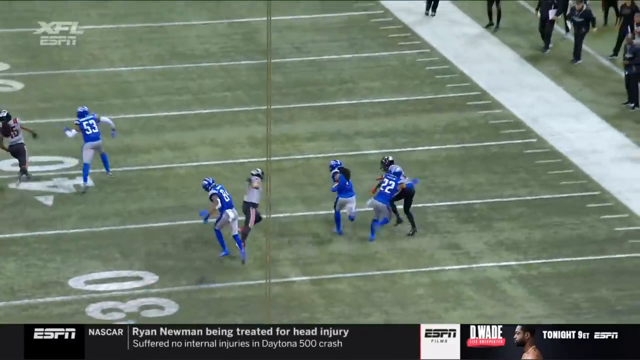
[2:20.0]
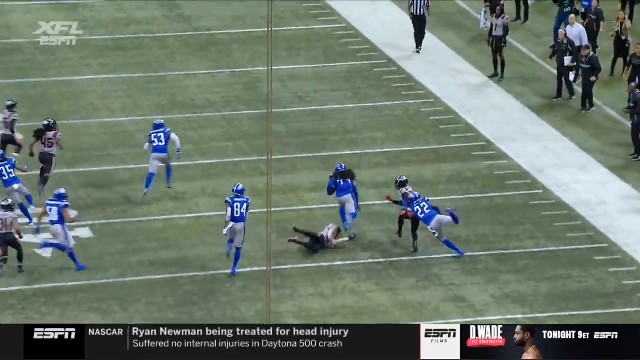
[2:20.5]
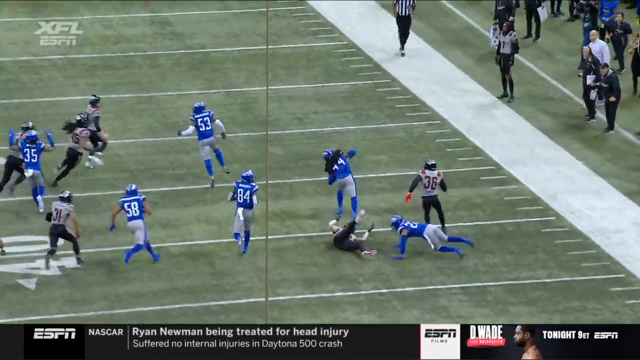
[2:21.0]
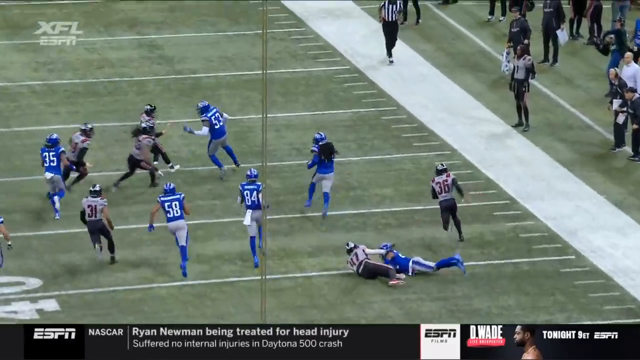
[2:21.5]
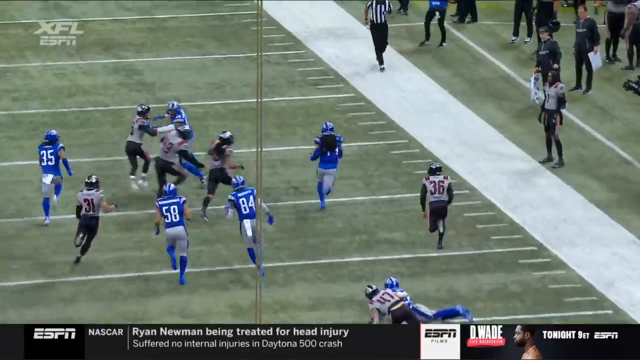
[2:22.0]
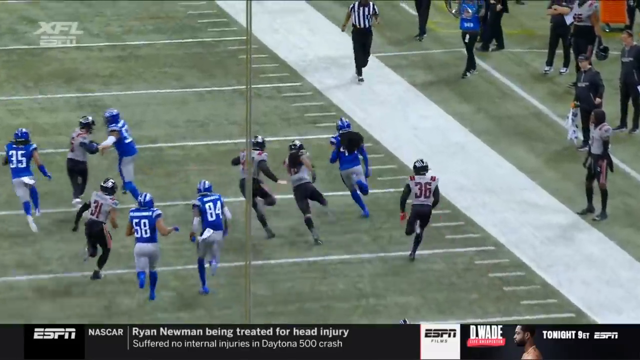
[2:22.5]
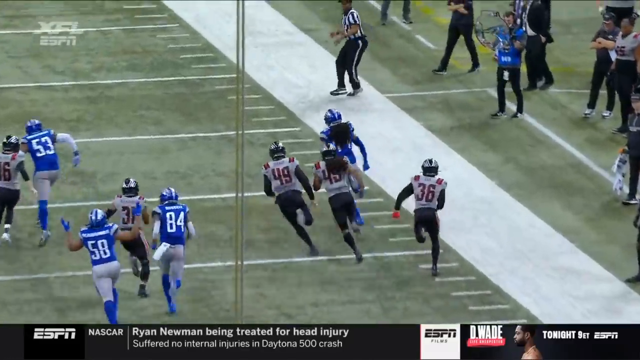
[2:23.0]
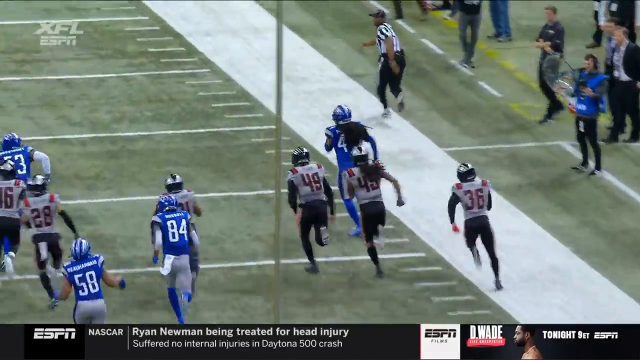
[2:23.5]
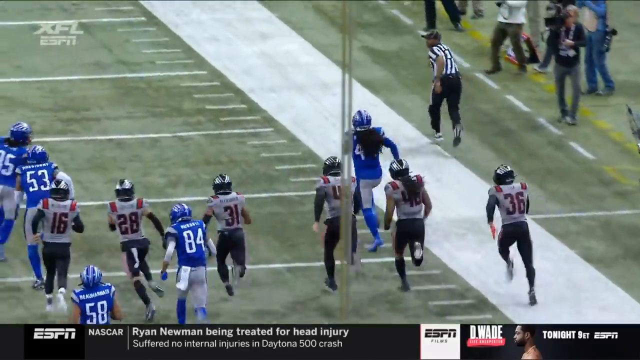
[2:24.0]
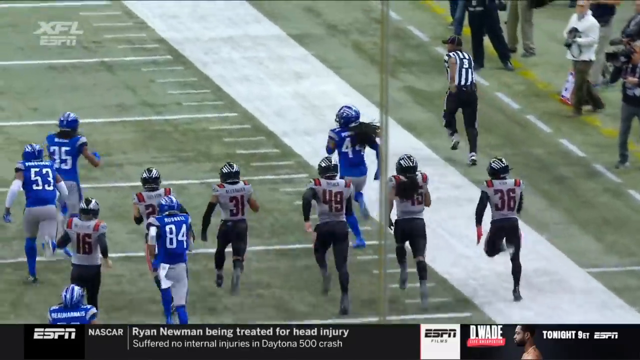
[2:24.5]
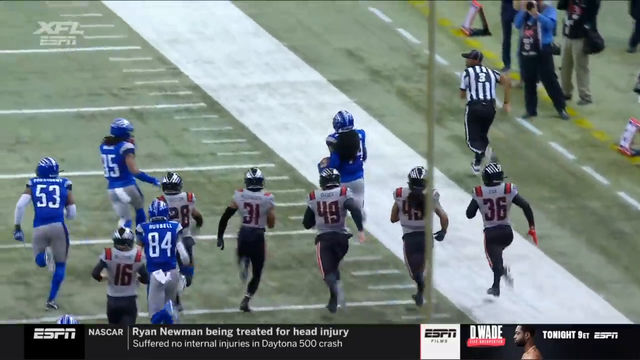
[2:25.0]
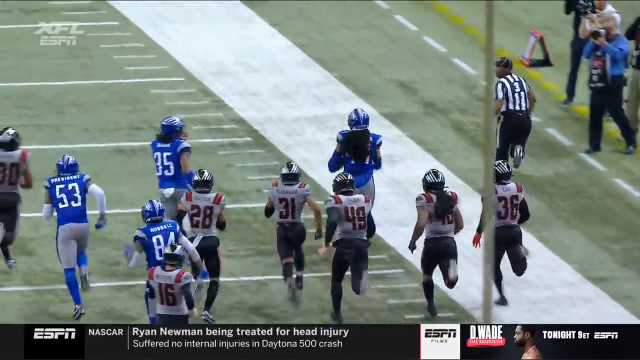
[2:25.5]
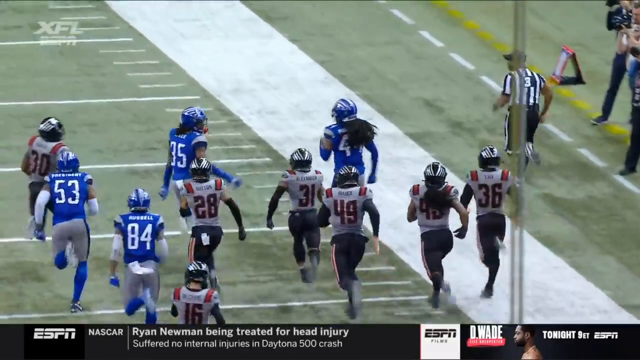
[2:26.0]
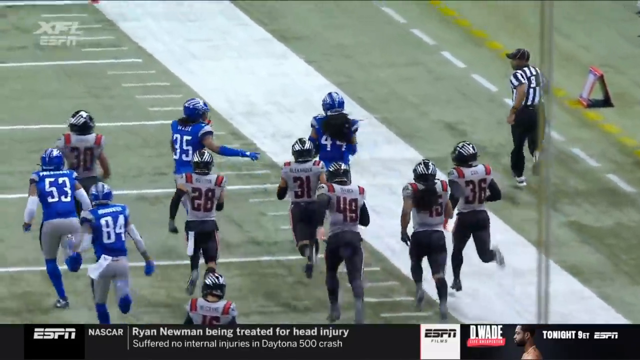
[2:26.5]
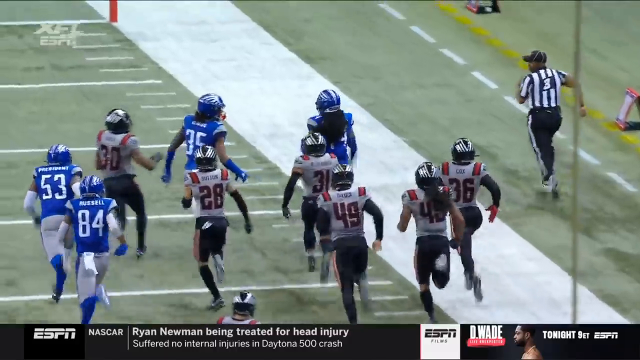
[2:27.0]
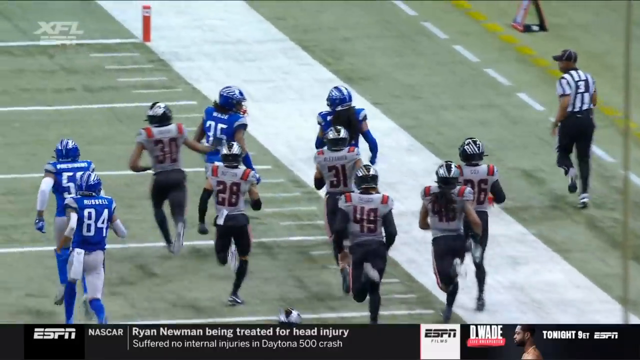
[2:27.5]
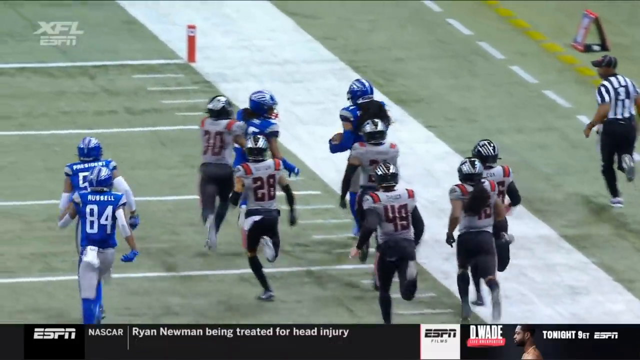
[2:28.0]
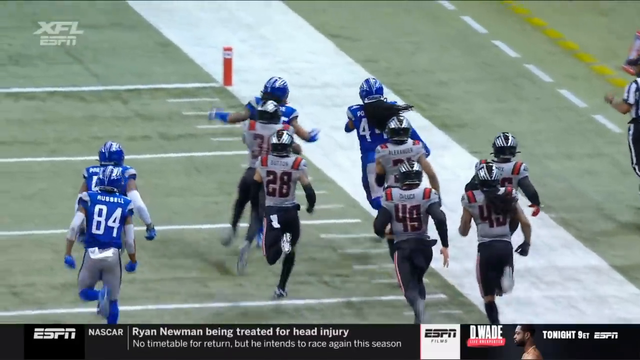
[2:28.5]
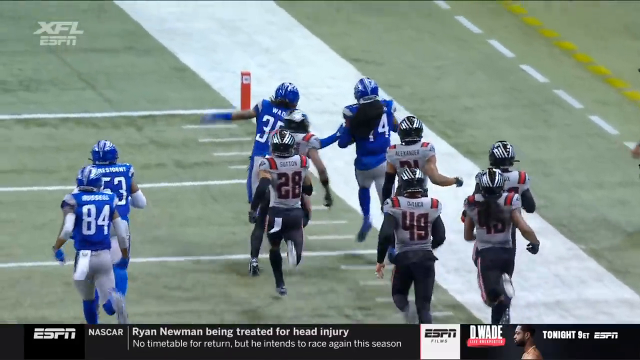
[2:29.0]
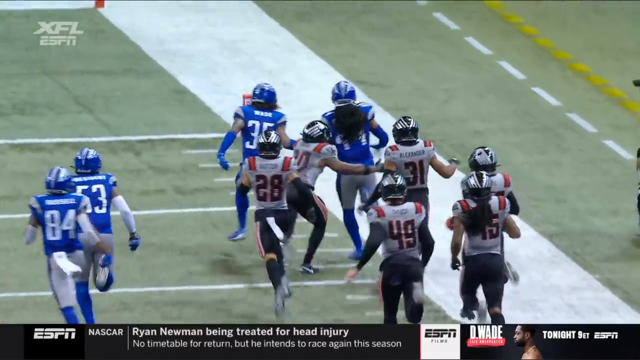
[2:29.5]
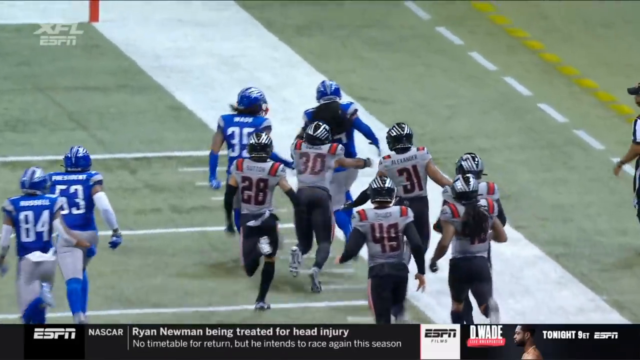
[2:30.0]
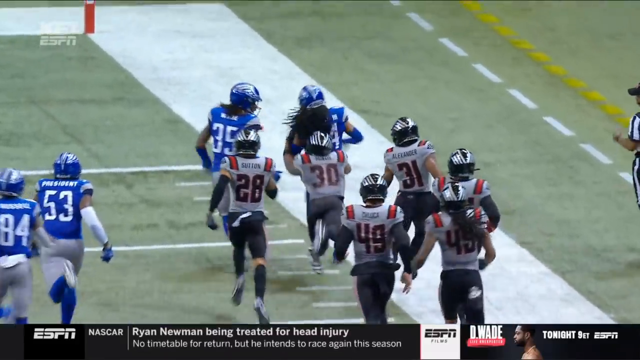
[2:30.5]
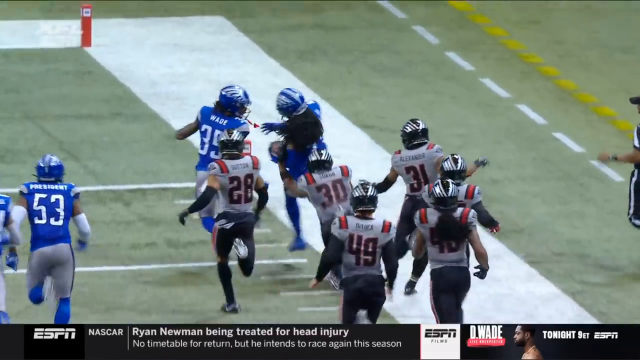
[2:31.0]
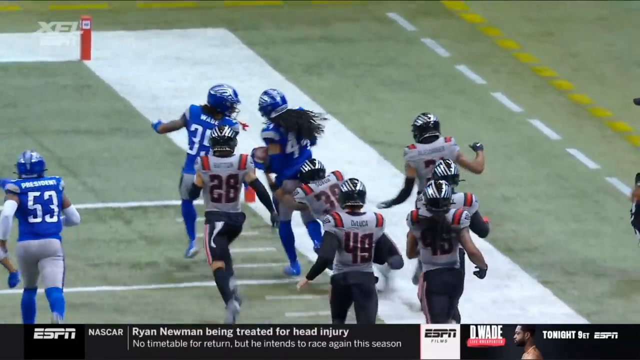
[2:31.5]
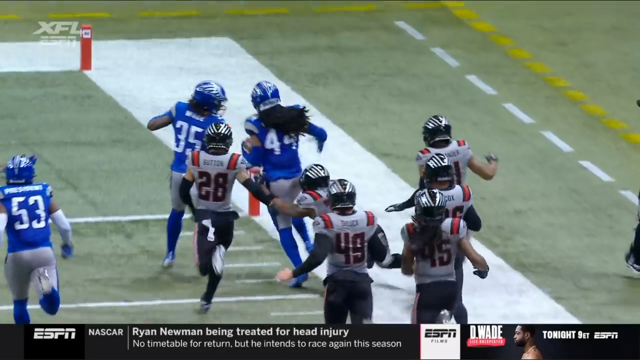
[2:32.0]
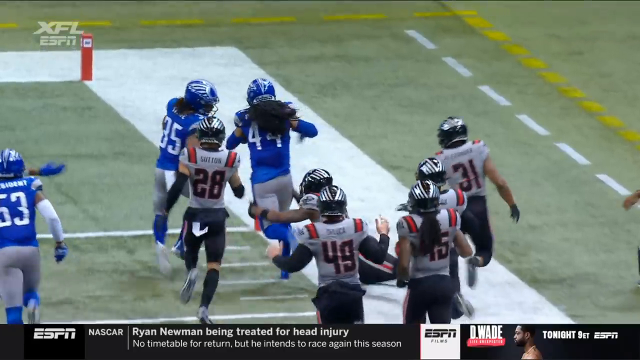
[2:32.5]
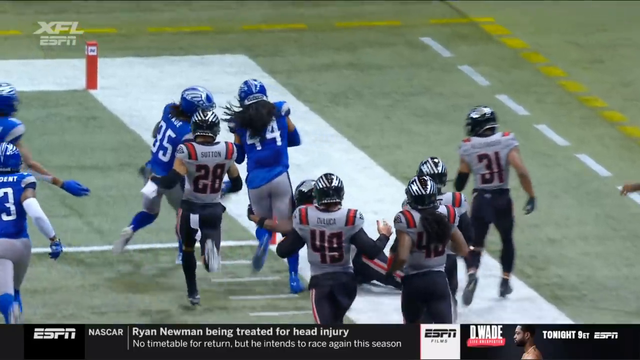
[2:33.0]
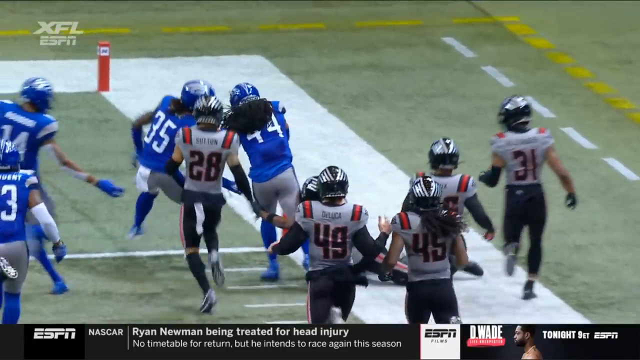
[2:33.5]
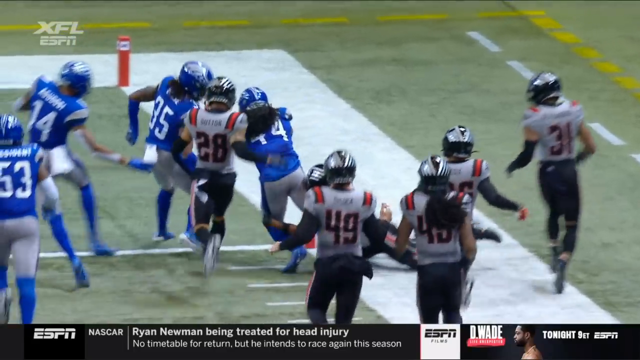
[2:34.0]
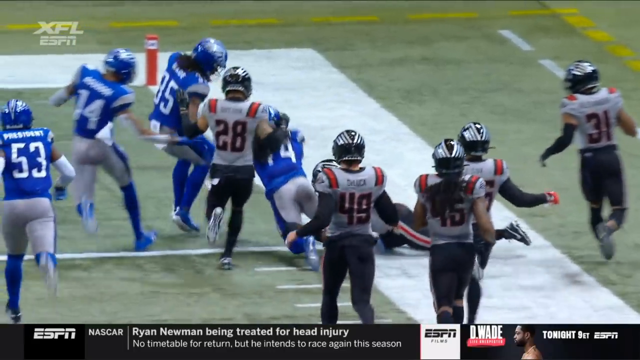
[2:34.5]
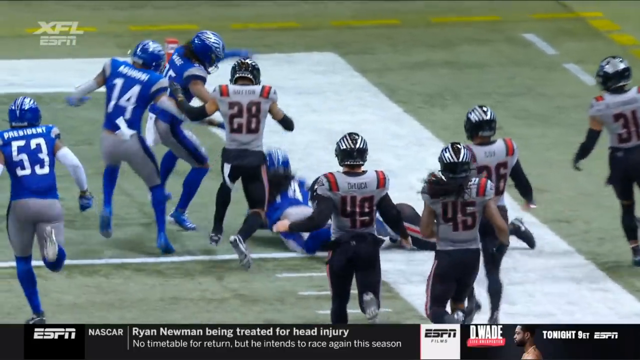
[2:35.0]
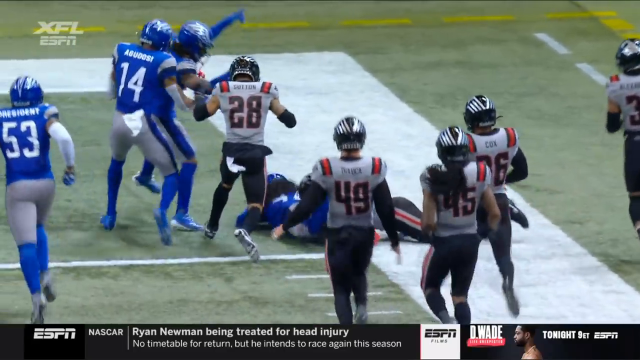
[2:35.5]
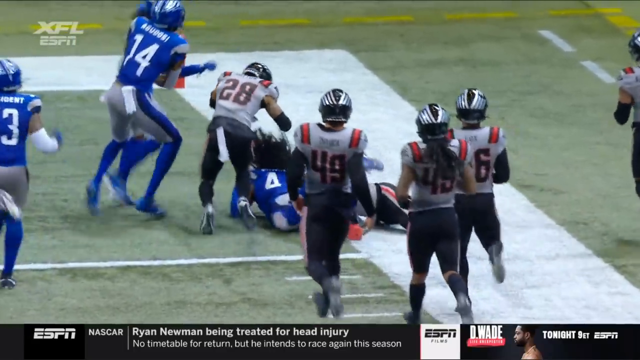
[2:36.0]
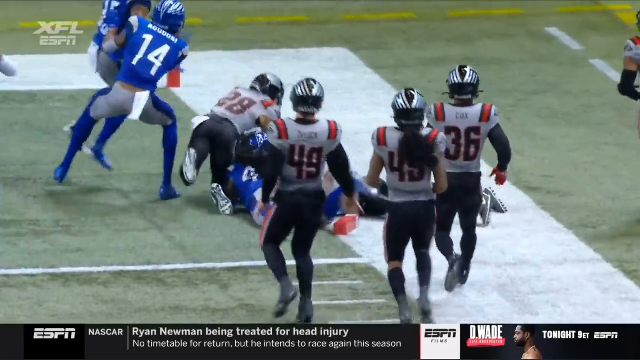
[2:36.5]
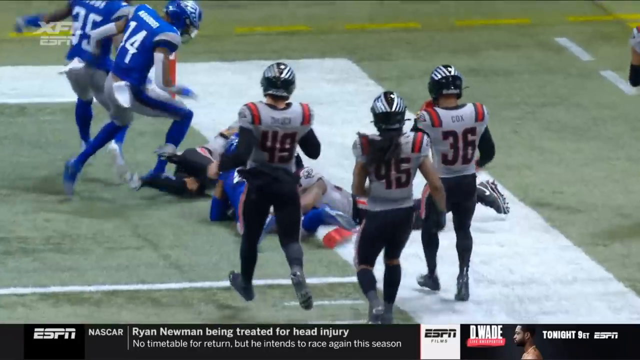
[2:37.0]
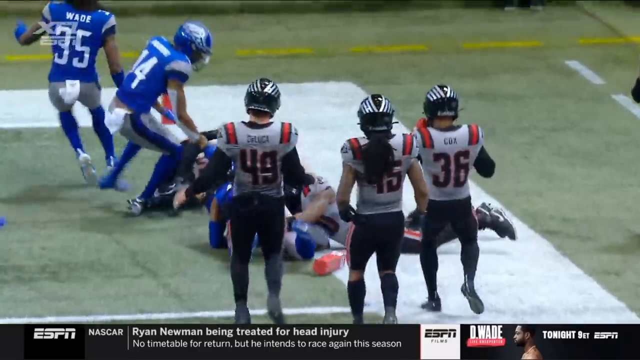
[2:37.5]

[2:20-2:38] An XFL football game opens with a team in black, white and red kicking off to the Battle Hawks in blue and white. One of them catches the ball and throws it to another player, who runs for a touchdown and scores. The players cheer and jump all over each other, and the fans cheer, including fans in hawk outfits. A sportscaster is shown up in the box at the top of the stadium, and a split screen shows a referee in a black and white striped shirt with 81 on it, walking, talking and pointing before throwing his right arm down. The Battle Hawks go for extra points and miss. The player who scored, wearing jersey number 44, is interviewed by a lady from ESPN. "XFL ESPN" appears, then the touchdown is shown in replay, going into slow motion, and the video ends.